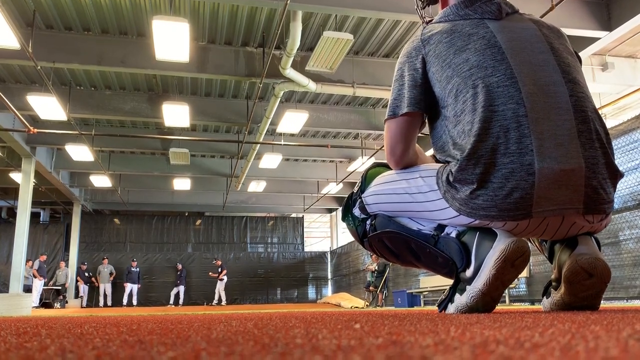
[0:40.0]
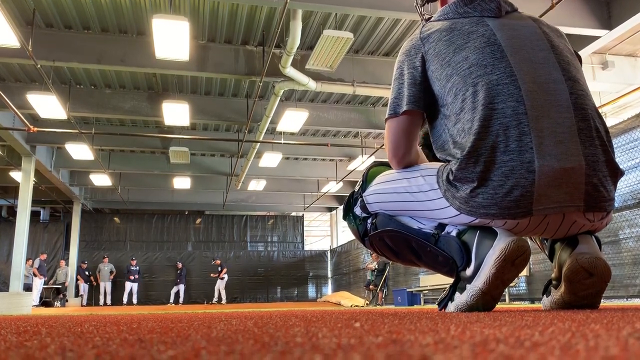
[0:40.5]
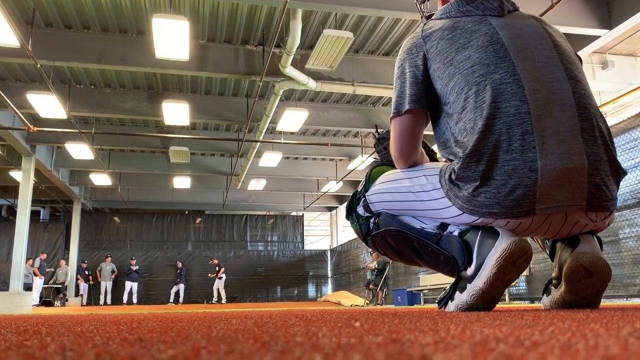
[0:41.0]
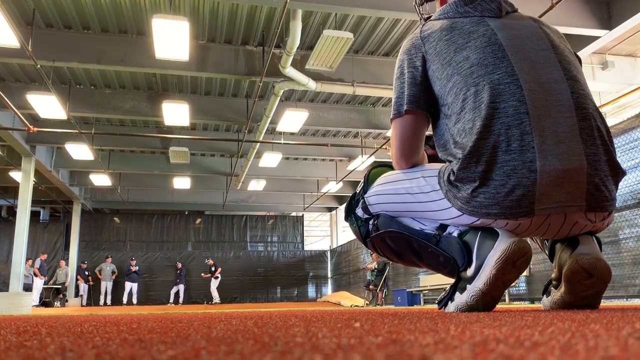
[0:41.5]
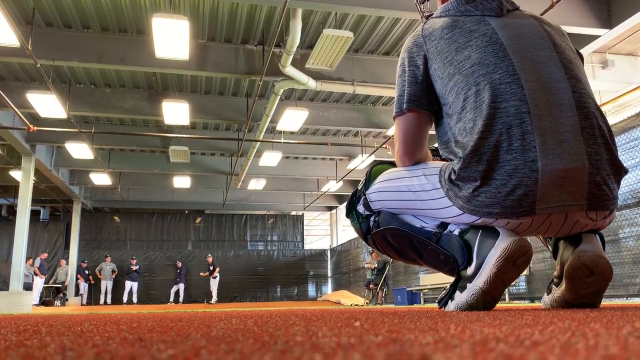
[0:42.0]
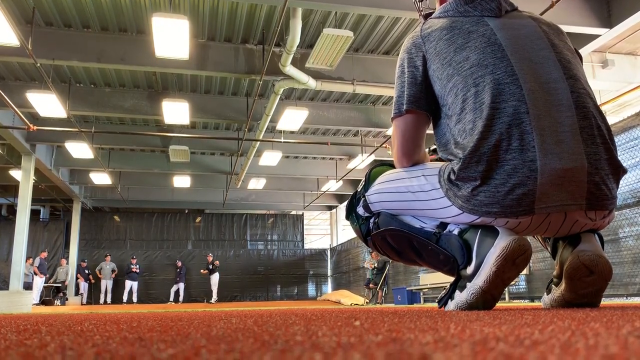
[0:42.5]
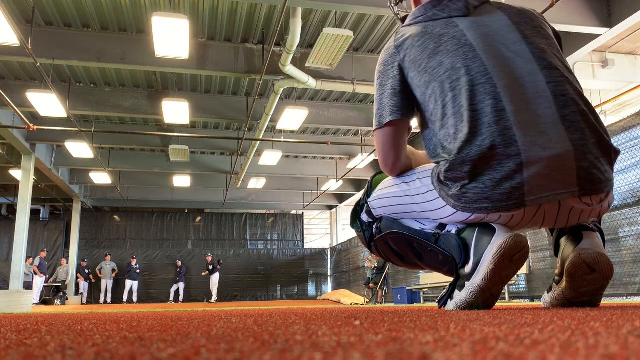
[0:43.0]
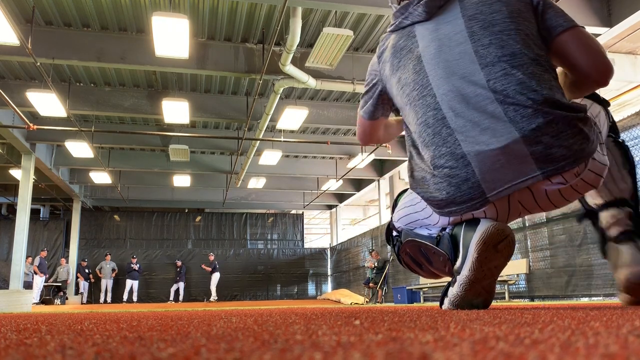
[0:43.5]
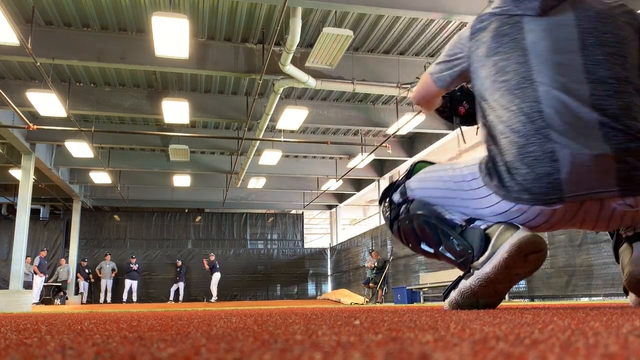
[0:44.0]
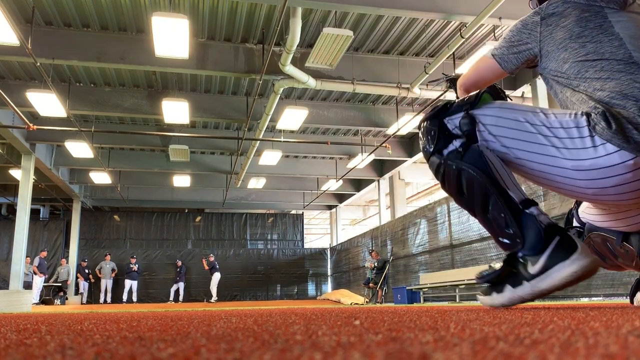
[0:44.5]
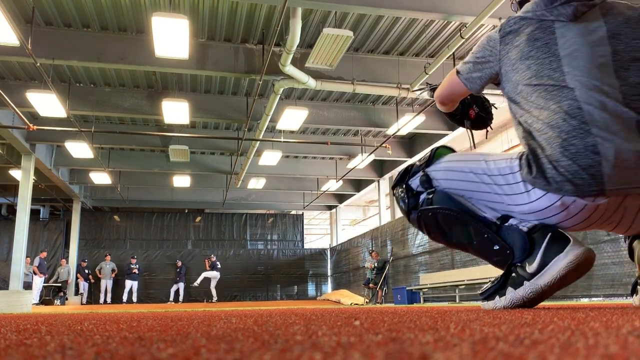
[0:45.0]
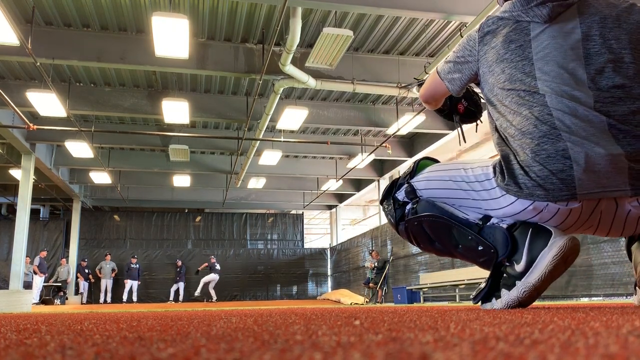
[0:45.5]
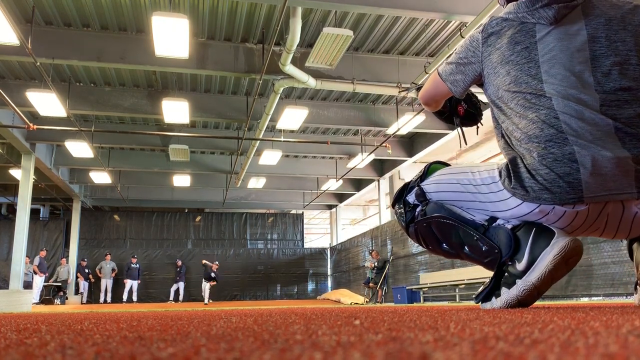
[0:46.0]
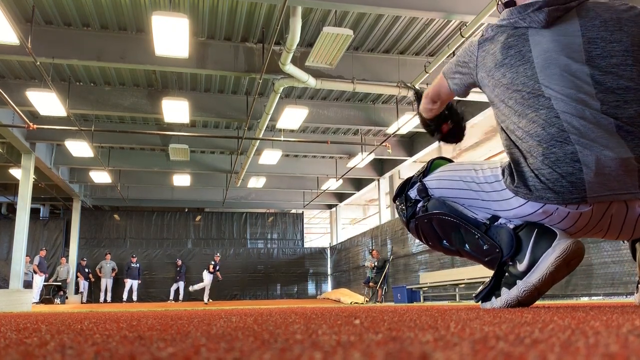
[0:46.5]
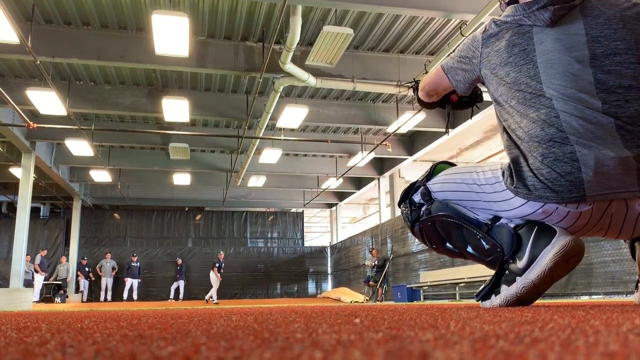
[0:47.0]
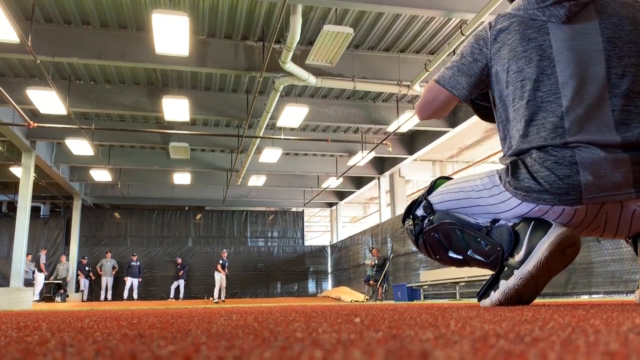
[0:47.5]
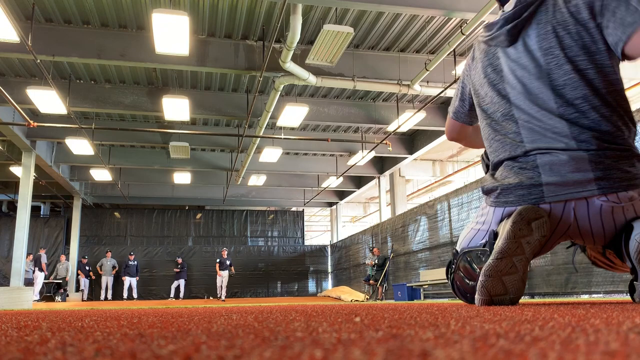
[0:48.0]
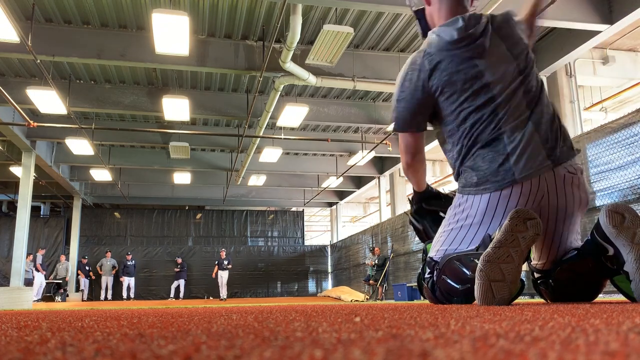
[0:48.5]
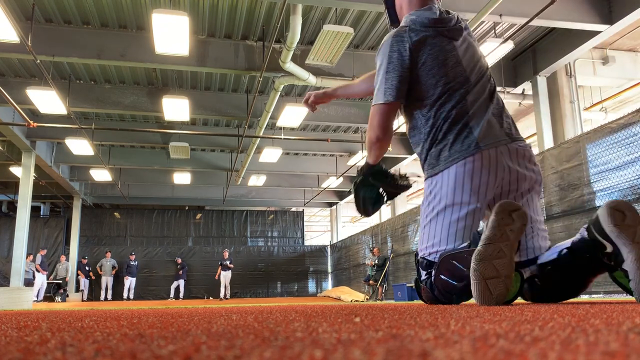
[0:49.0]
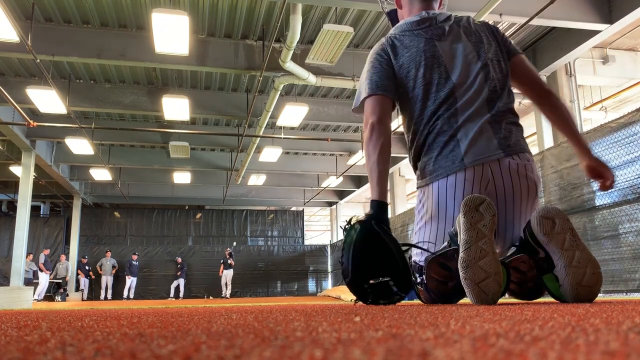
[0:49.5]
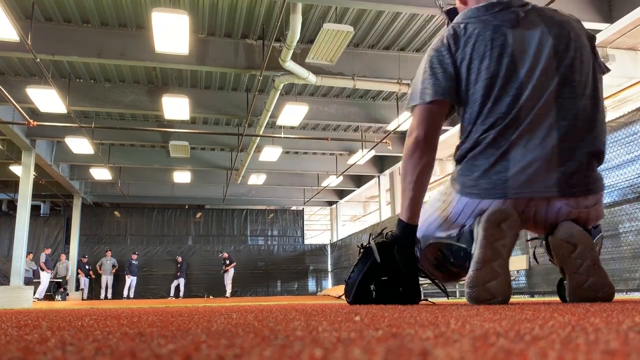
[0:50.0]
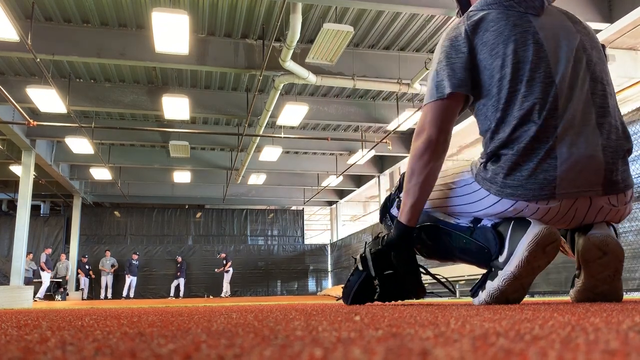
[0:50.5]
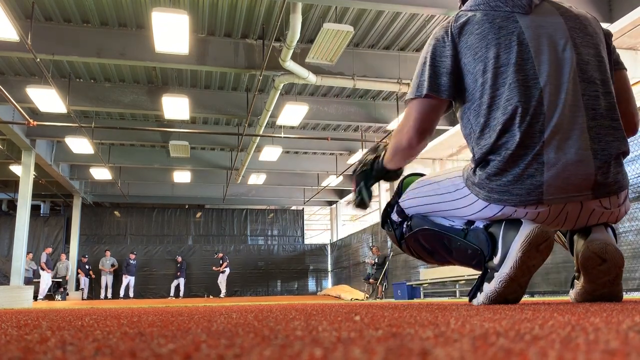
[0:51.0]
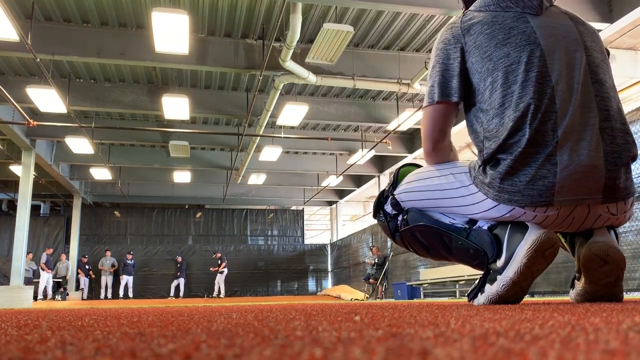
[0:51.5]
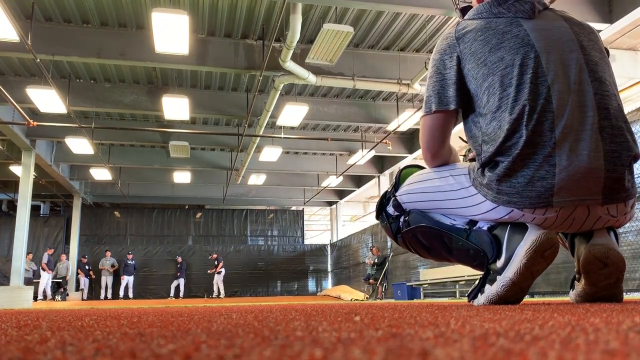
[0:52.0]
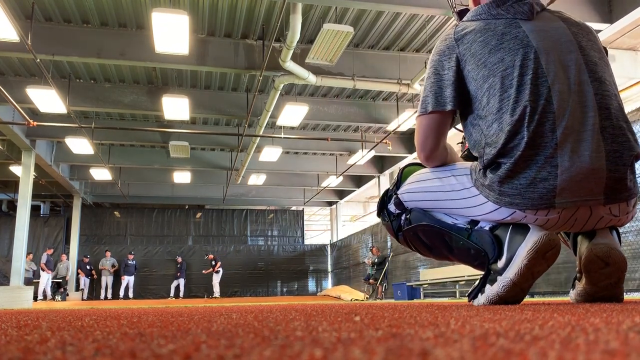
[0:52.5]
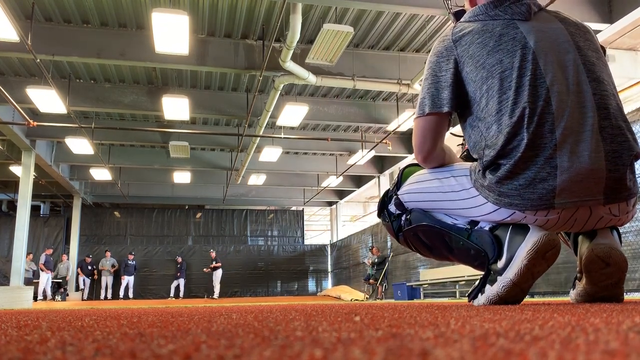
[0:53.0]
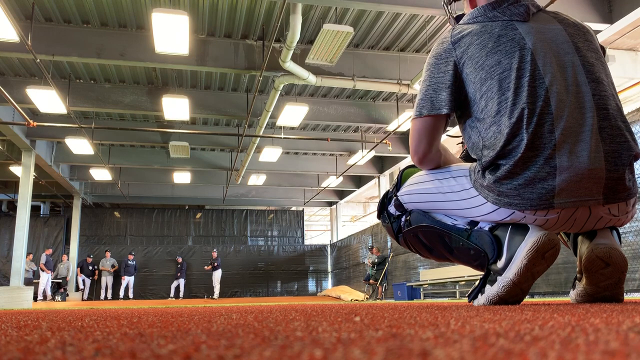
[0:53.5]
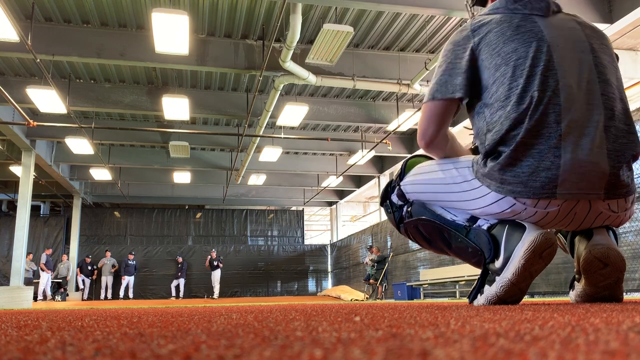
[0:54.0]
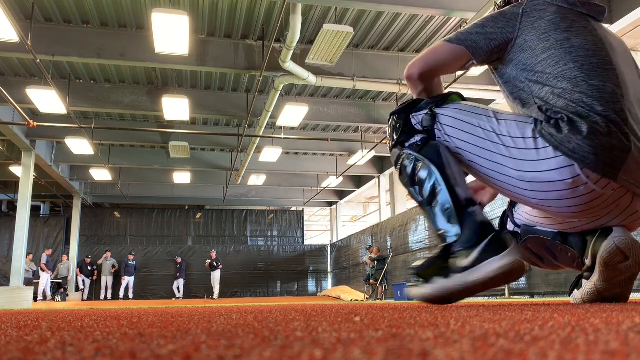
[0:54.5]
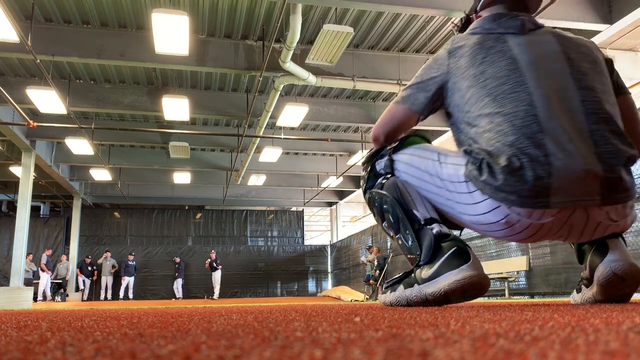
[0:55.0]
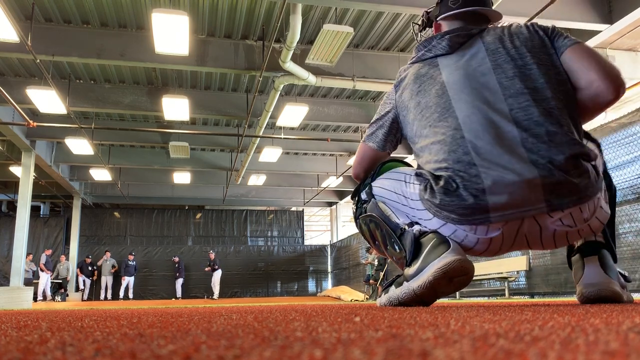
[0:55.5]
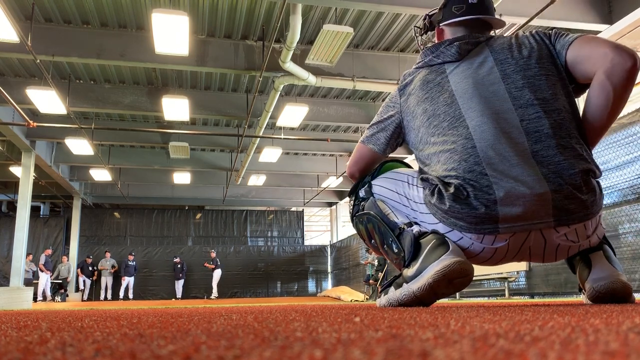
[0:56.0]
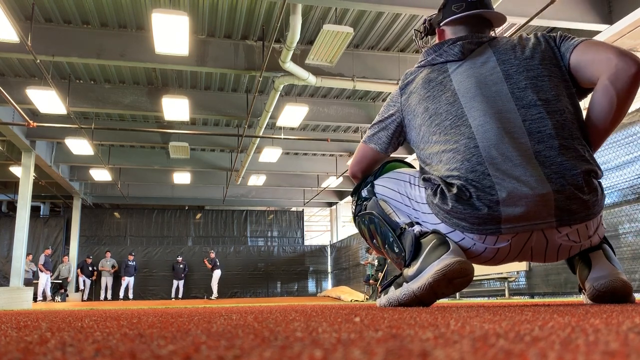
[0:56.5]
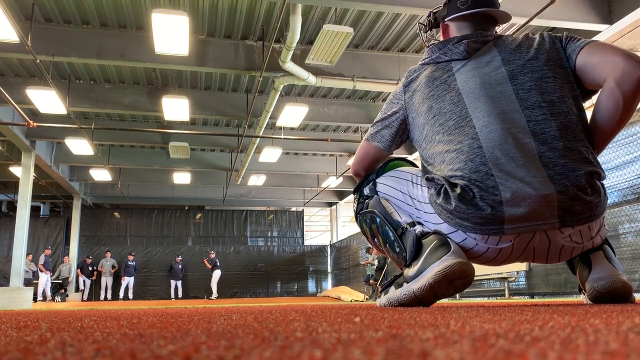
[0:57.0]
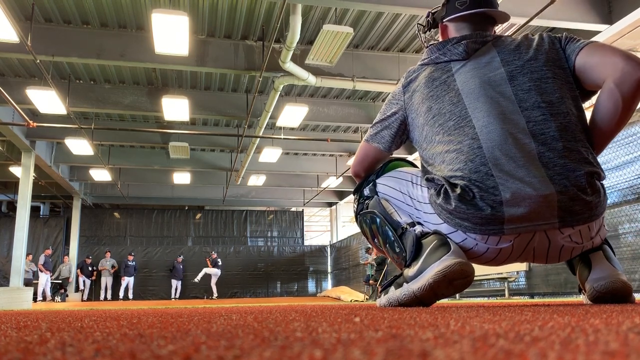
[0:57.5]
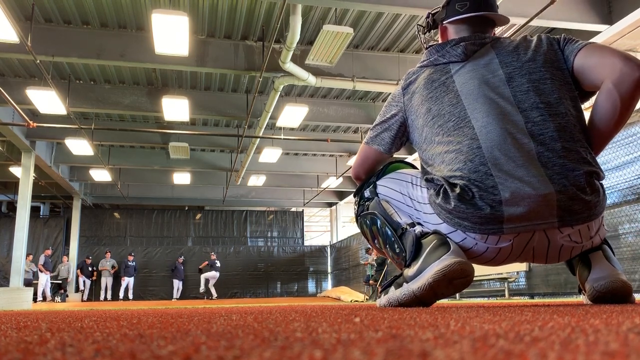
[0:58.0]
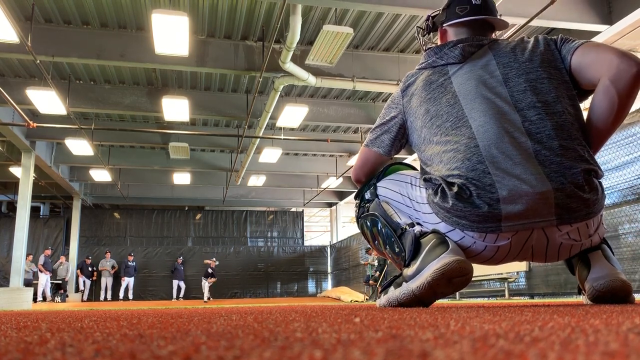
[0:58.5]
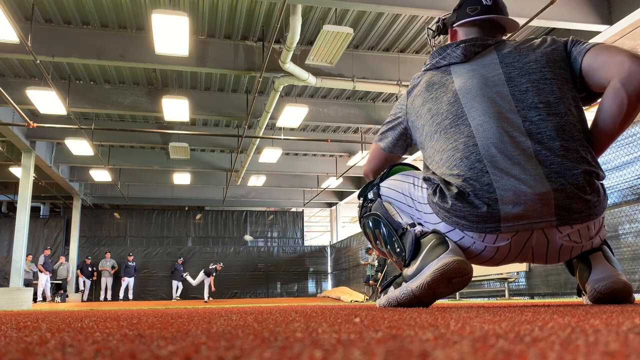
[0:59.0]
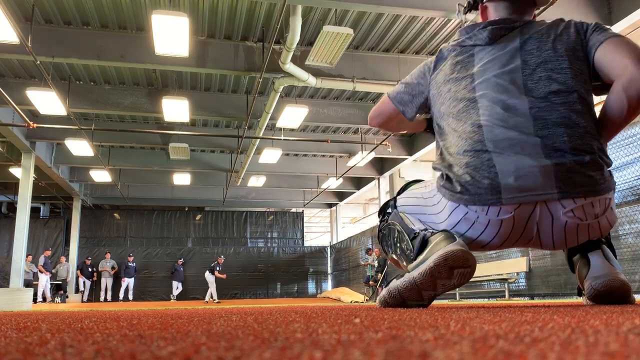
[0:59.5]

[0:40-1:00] The pitcher continues throwing a few more pitches or tosses to the catcher. Nine people are now observing the session: seven stand to the right of the pitcher against the far wall behind him, and two stand against the wall to the left of the pitcher and catcher. The pitcher throws two balls that both hit the ground before reaching the catcher, so the catcher catches each on a bounce just before it reaches him. The third throw reaches the catcher directly without bouncing. The building's walls are not solid but are chain link fence covered with mesh, and behind them occasional traffic is visible as cars drive past.